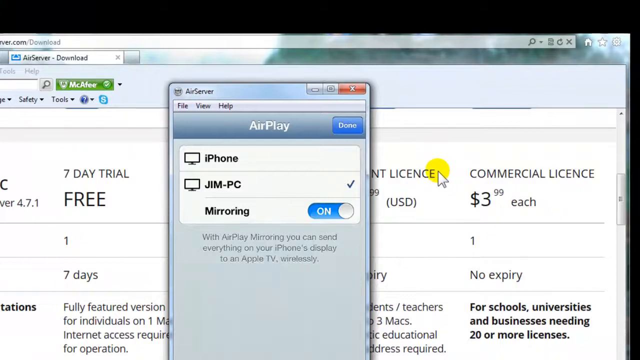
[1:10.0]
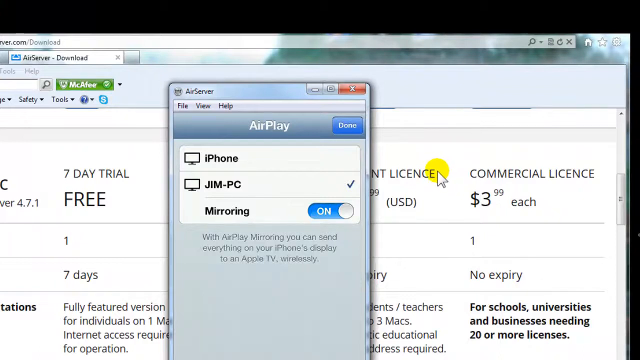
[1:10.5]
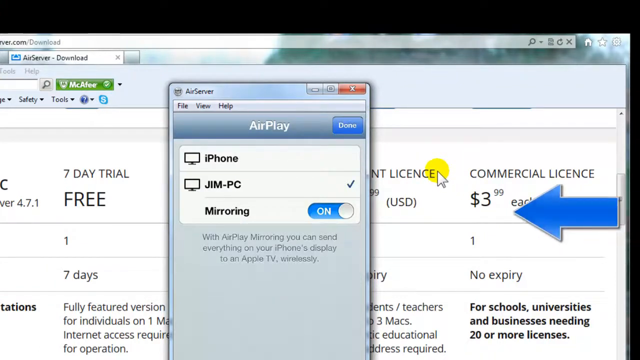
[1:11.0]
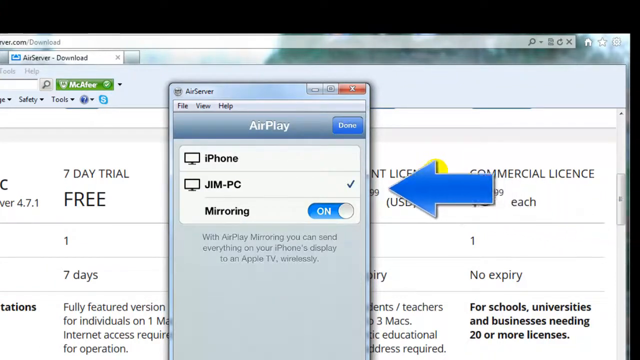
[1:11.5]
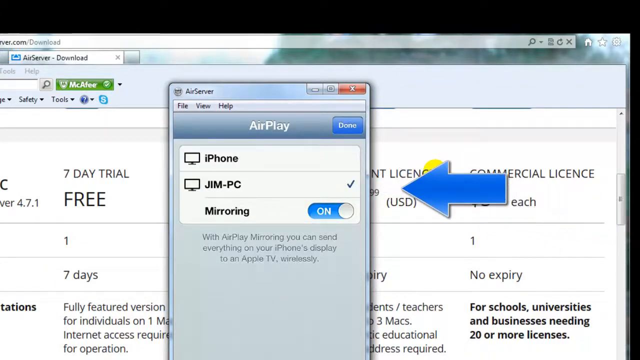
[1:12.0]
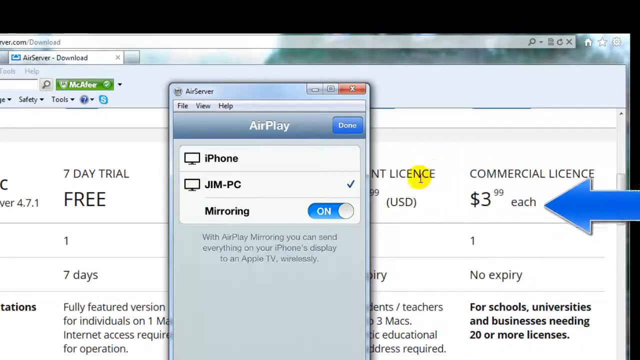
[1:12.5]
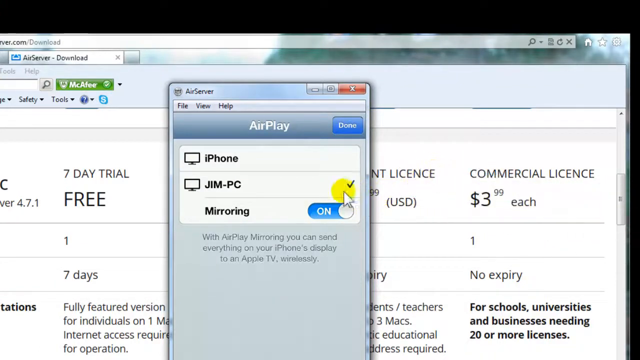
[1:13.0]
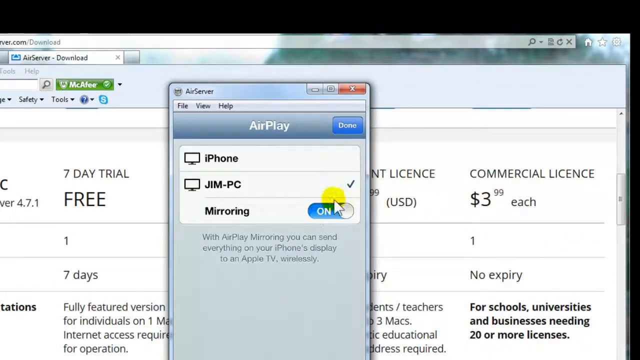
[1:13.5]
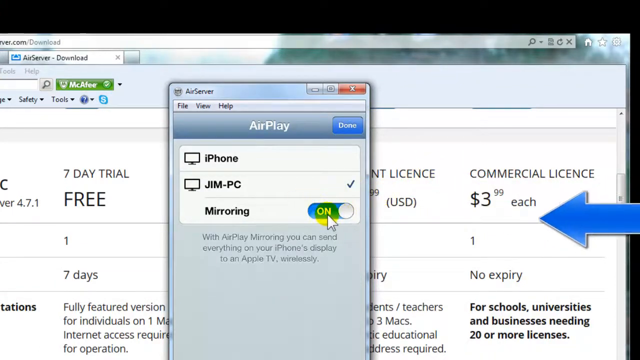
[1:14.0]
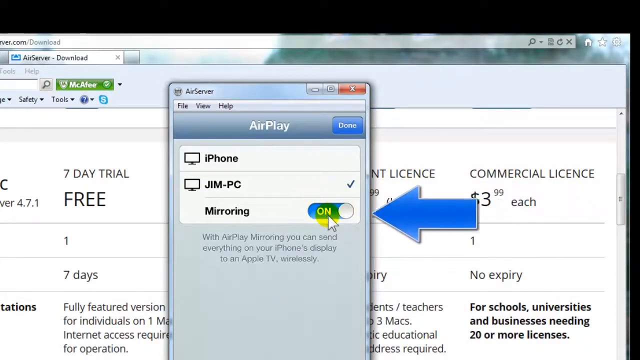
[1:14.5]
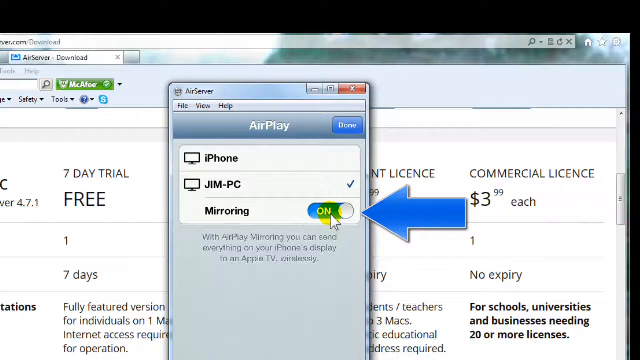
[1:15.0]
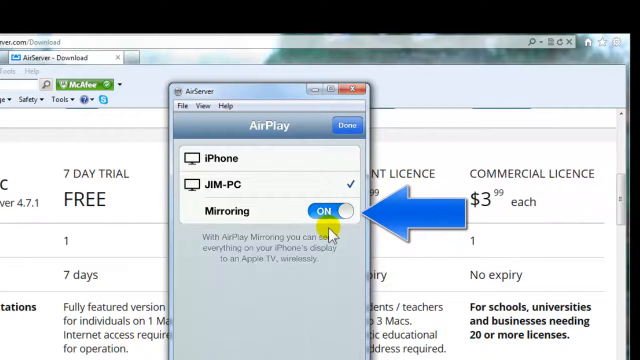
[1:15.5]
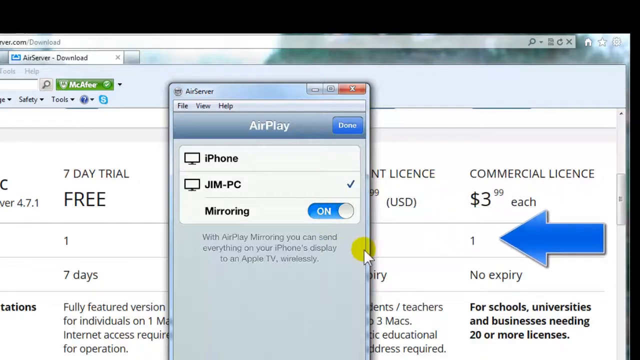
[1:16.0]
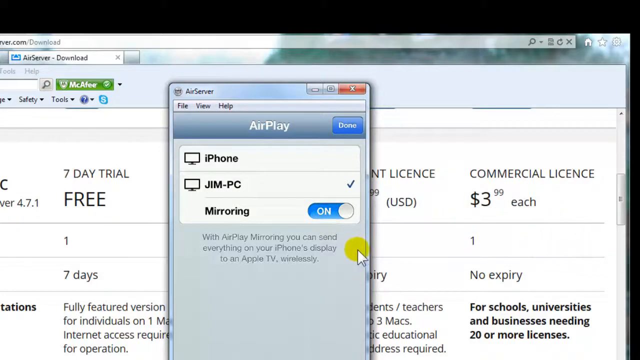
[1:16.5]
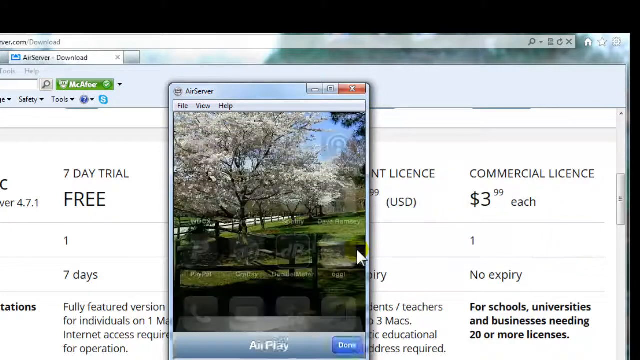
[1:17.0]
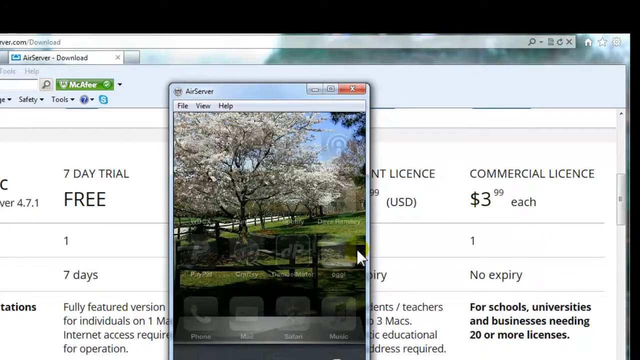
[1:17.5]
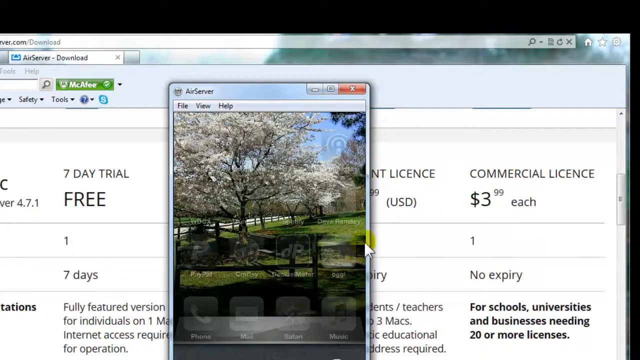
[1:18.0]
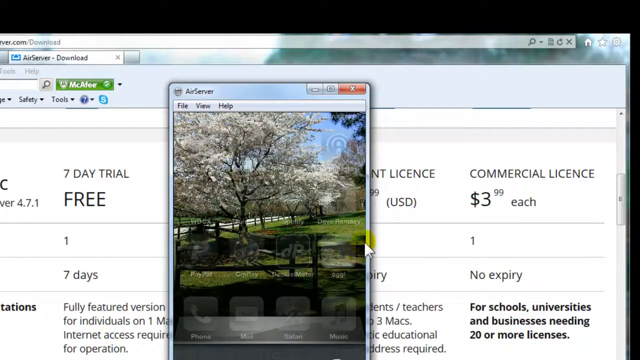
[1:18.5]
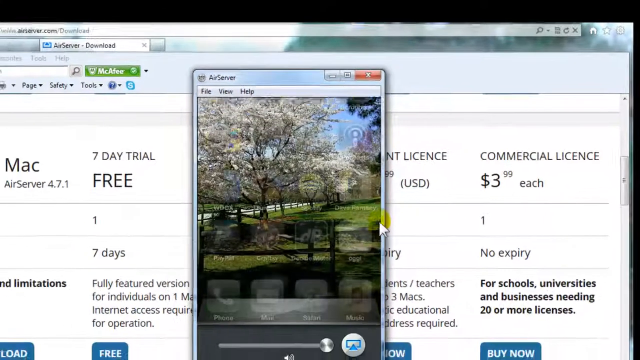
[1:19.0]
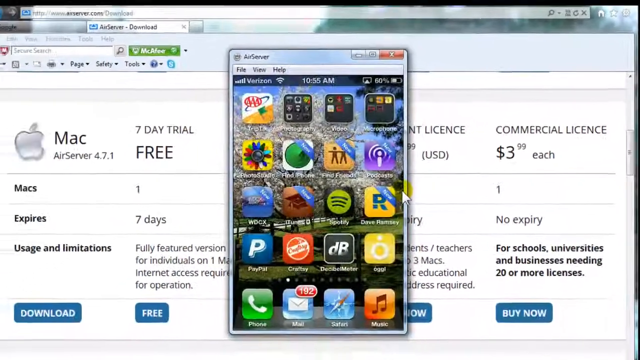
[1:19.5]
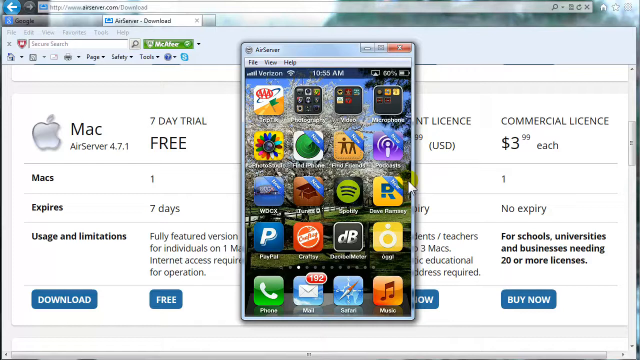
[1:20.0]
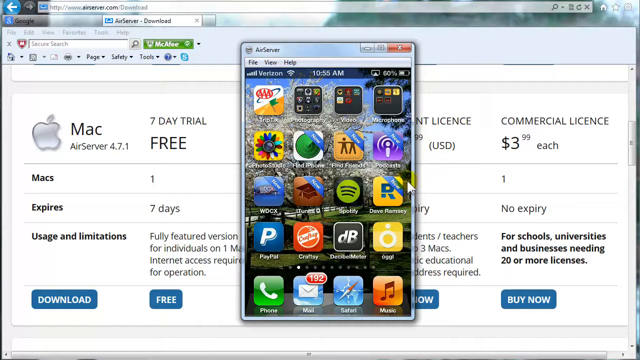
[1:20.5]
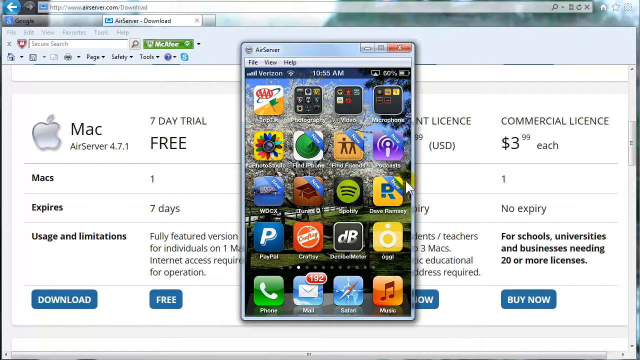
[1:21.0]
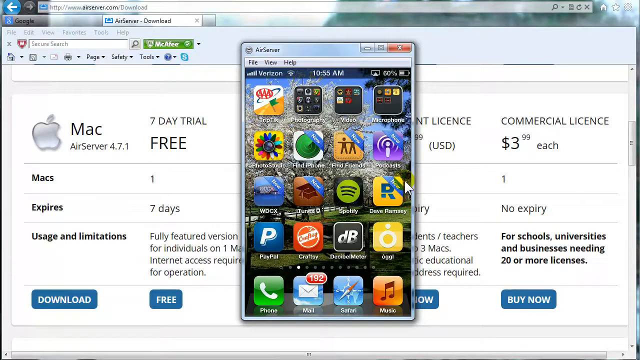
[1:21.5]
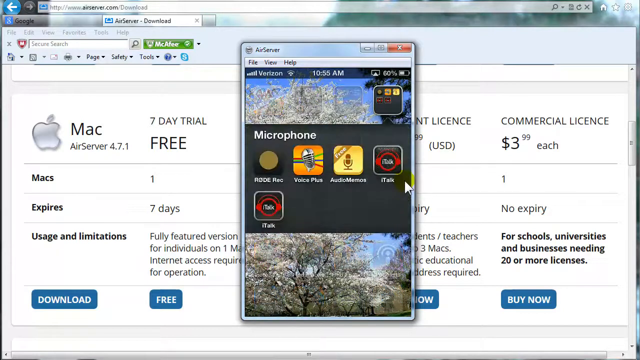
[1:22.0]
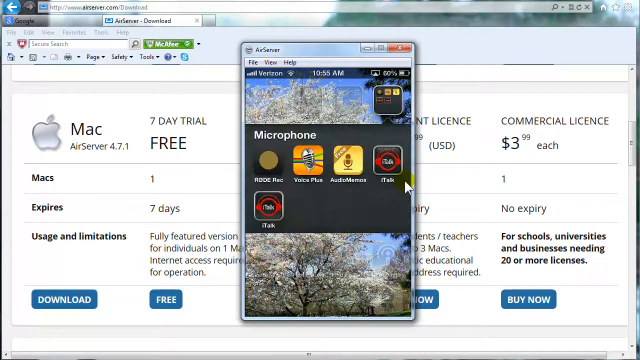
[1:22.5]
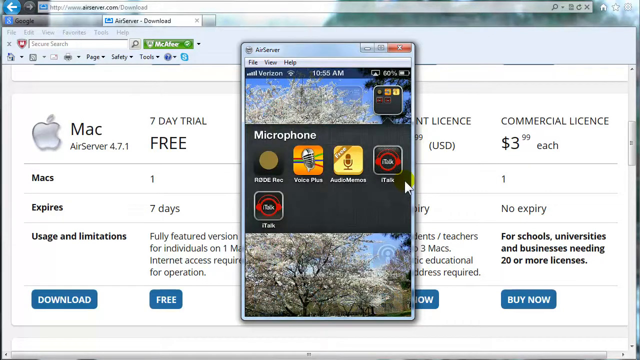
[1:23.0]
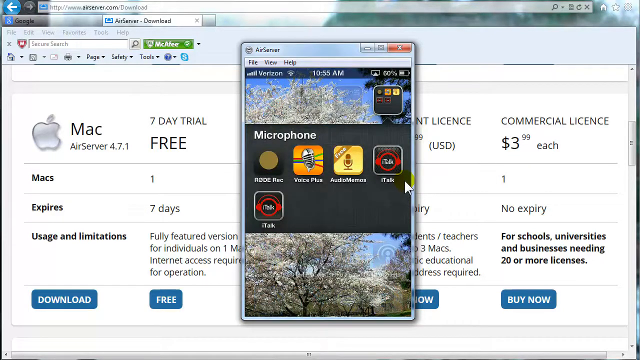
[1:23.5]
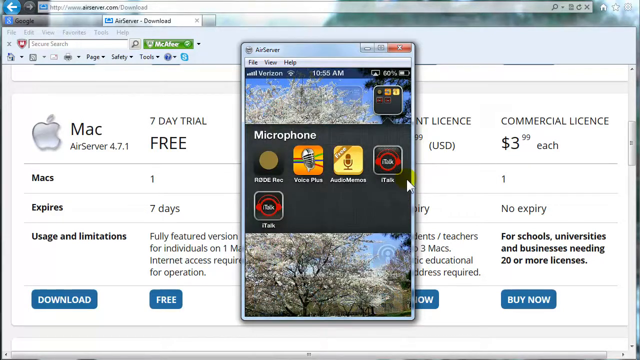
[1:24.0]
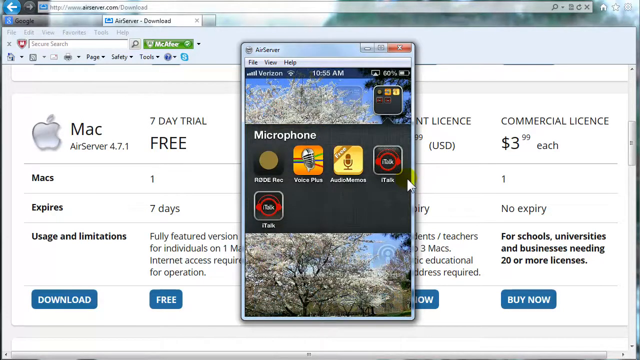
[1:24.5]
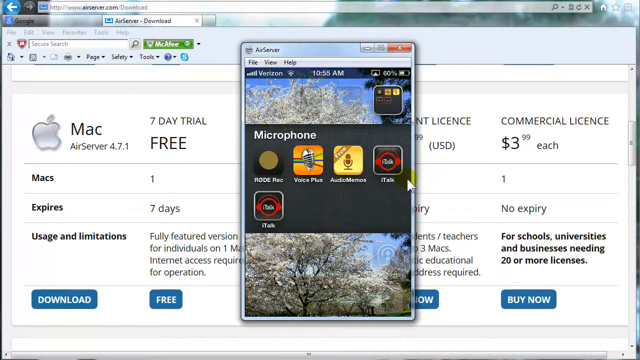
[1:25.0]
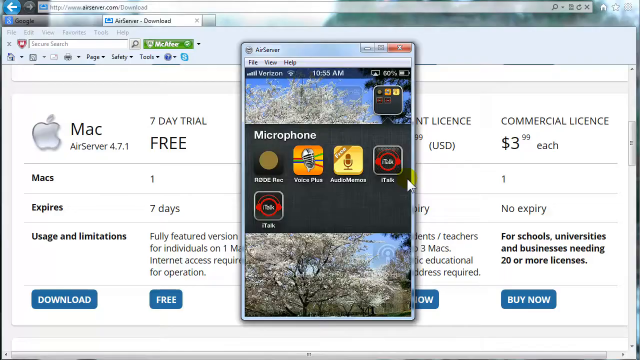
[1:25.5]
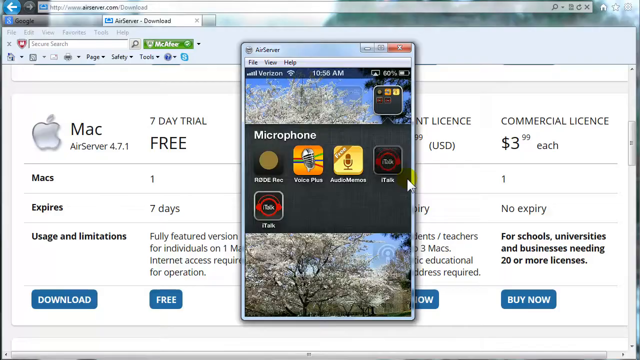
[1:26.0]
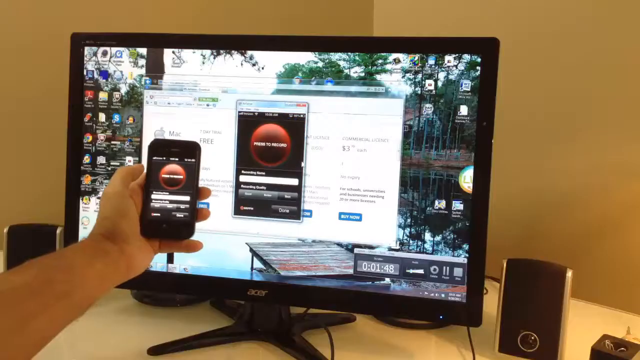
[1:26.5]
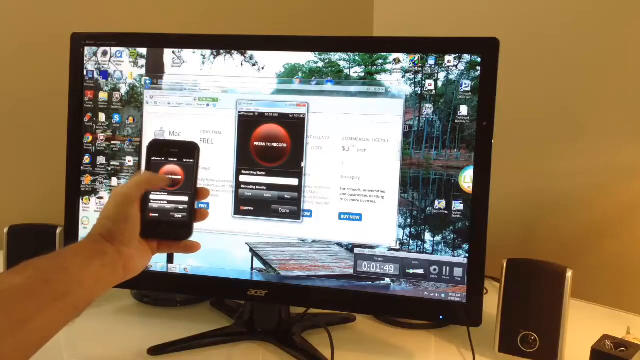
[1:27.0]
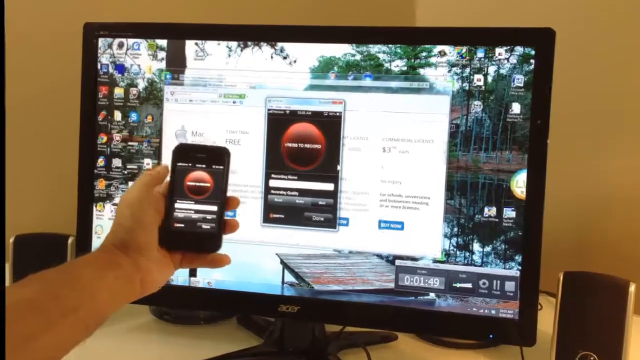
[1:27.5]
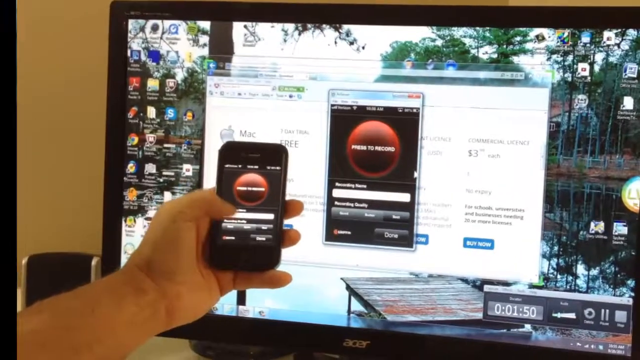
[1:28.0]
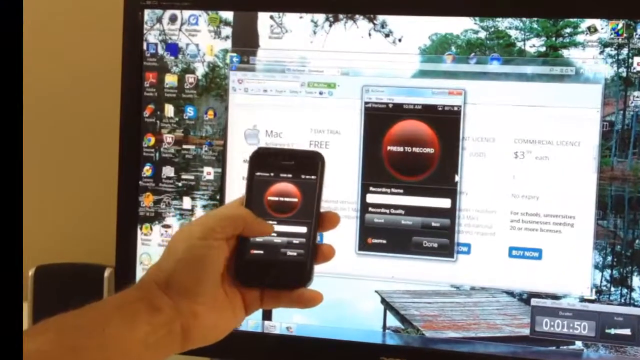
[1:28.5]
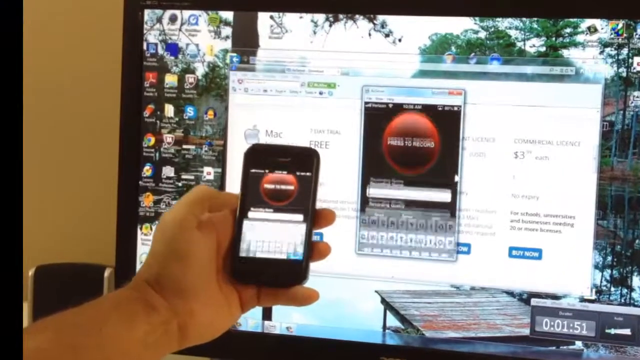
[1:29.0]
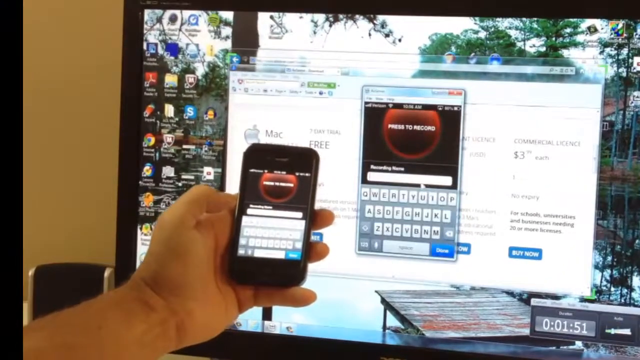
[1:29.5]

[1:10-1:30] A computer screen shows a window that says "AirPlay," with a menu that says "iPhone" and then "Jim / PC," followed by "mirroring." Toward the right it says "on" with a button next to it. A cursor circles the on button, and a blue arrow also points toward the button. The screen changes, and the window shows a picture of what looks like a park with a tree that has white leaves or flowers. It then changes to a set of icons, the image seems to go down, and a menu pops up that says "microphone," with four icons underneath it and one more icon underneath those four.